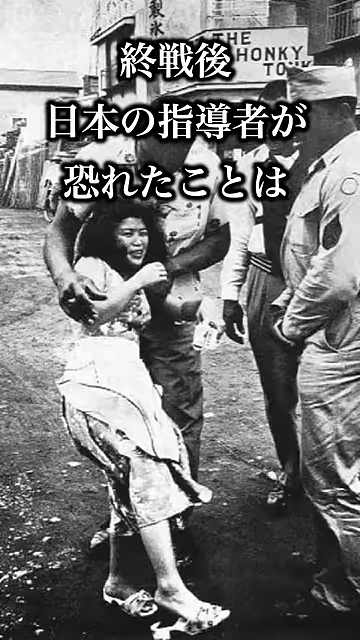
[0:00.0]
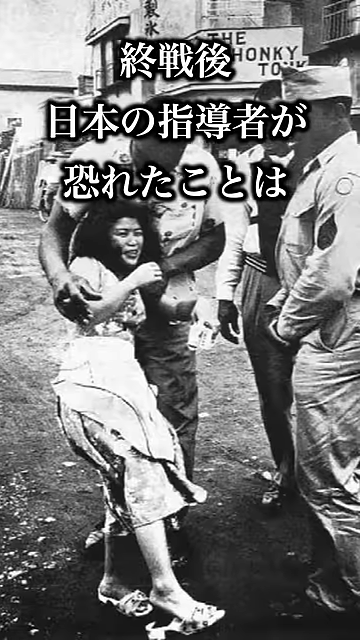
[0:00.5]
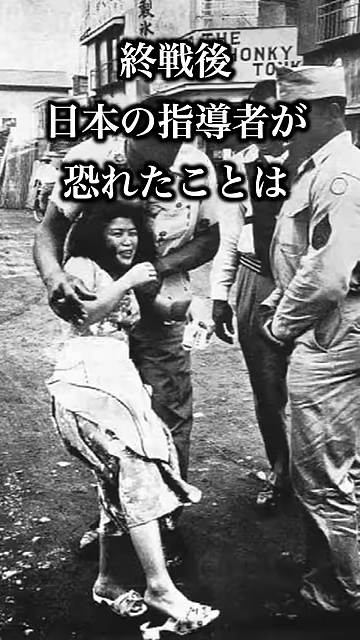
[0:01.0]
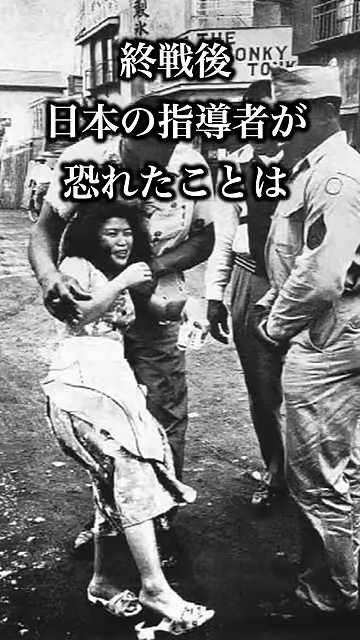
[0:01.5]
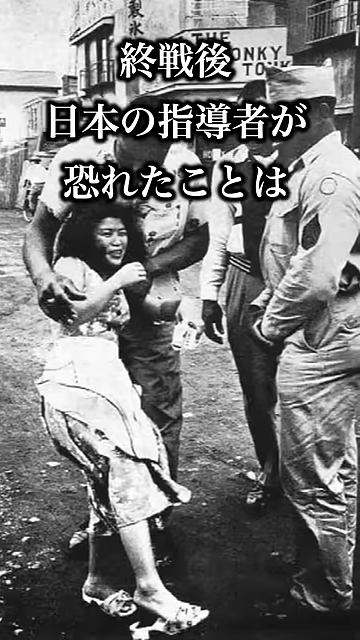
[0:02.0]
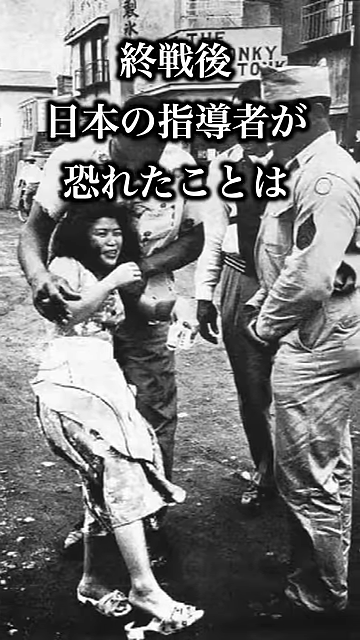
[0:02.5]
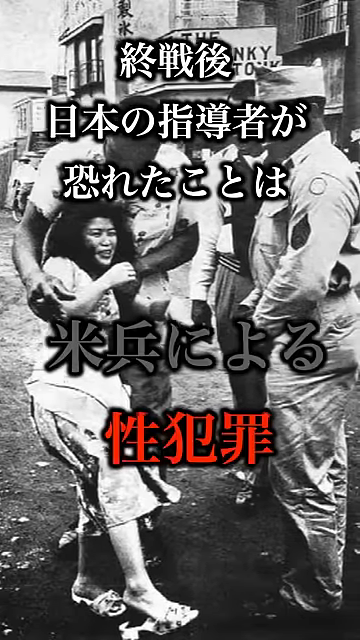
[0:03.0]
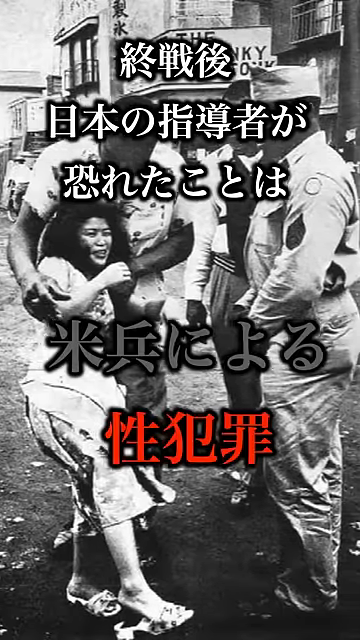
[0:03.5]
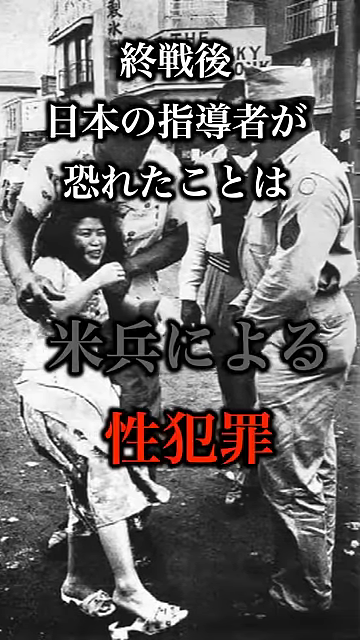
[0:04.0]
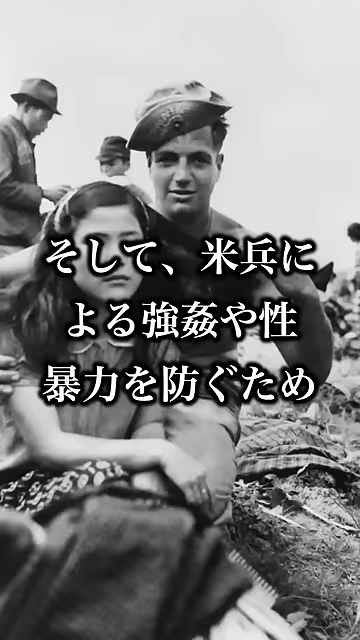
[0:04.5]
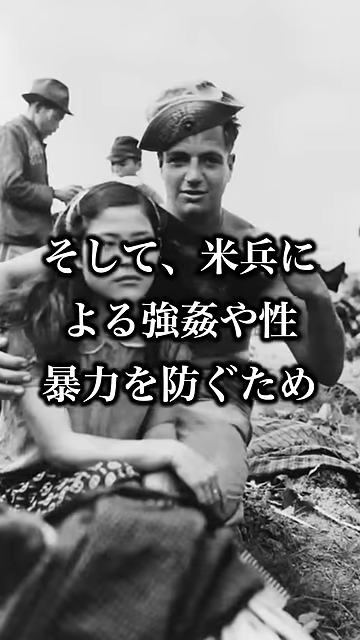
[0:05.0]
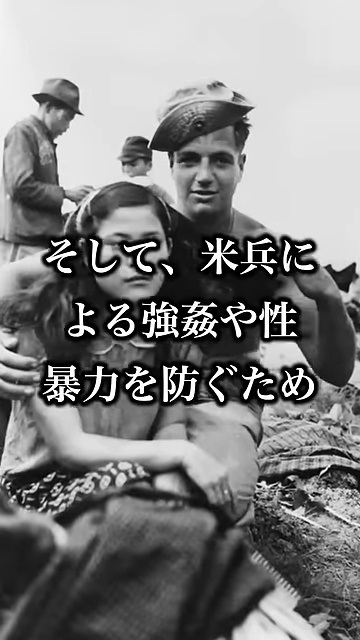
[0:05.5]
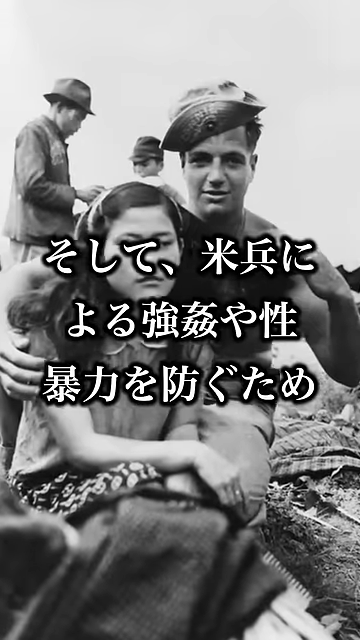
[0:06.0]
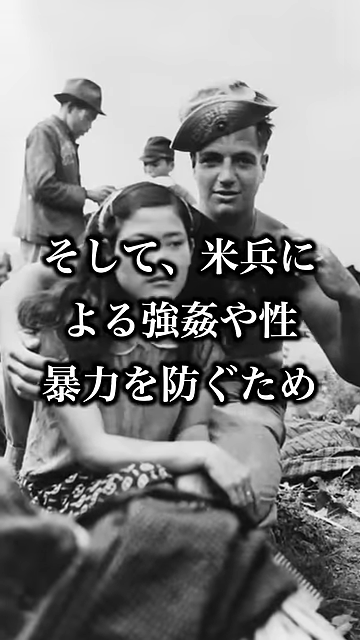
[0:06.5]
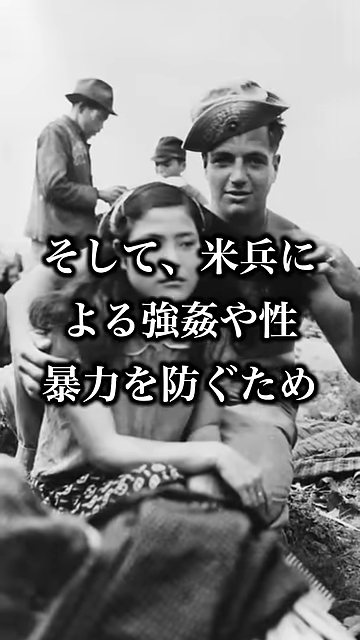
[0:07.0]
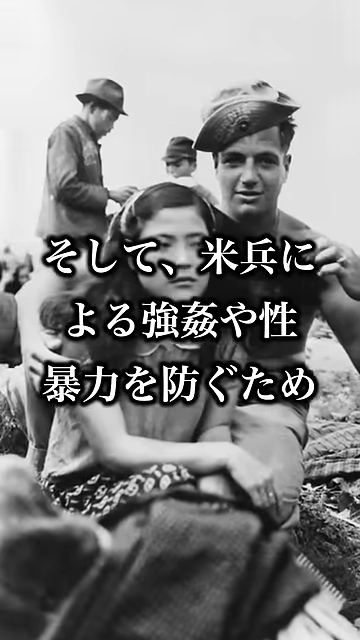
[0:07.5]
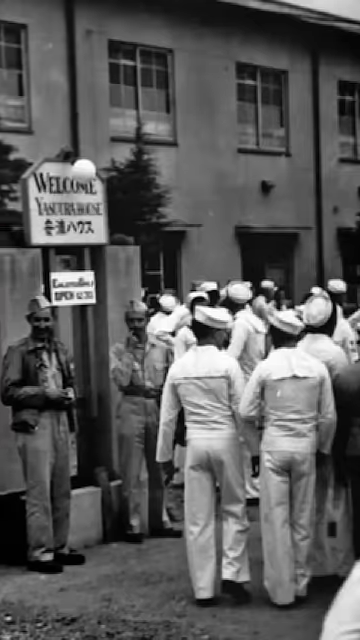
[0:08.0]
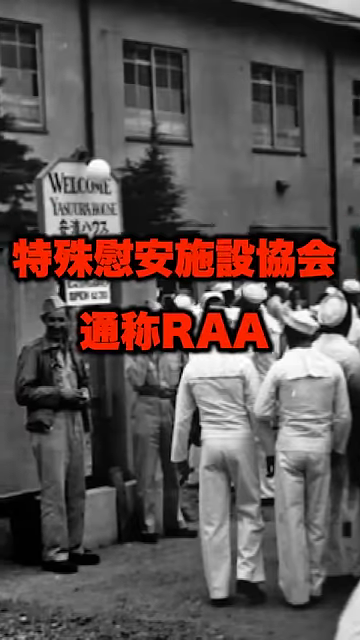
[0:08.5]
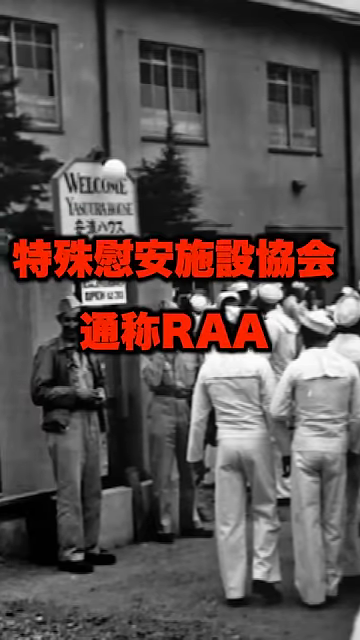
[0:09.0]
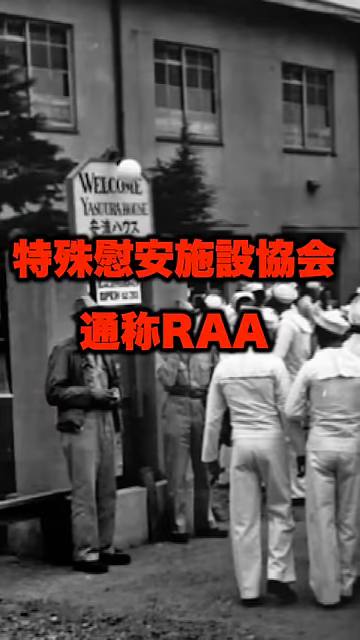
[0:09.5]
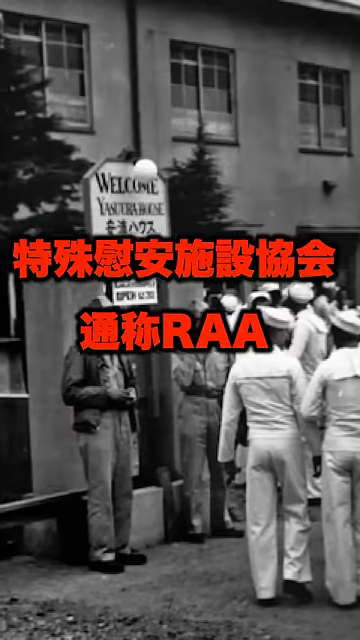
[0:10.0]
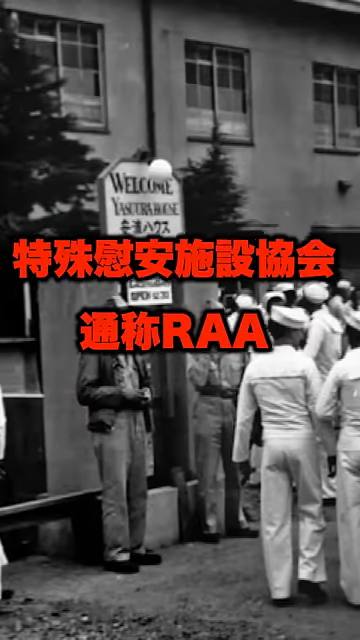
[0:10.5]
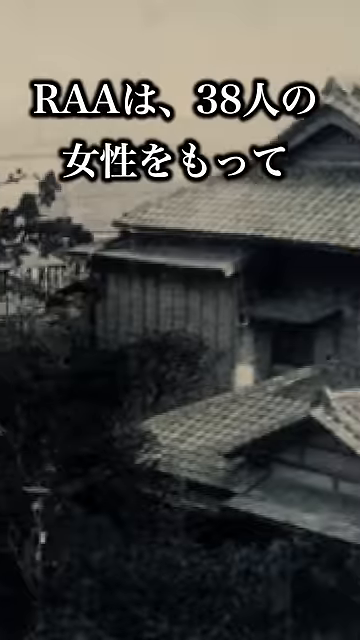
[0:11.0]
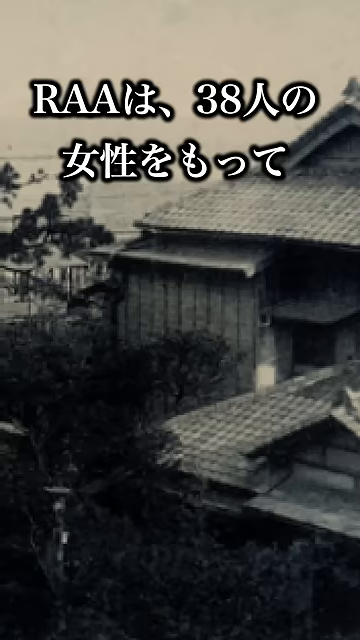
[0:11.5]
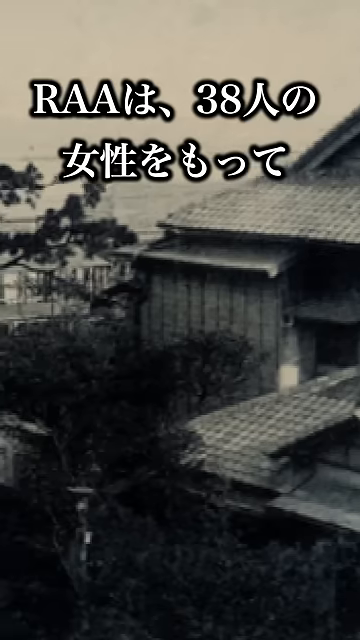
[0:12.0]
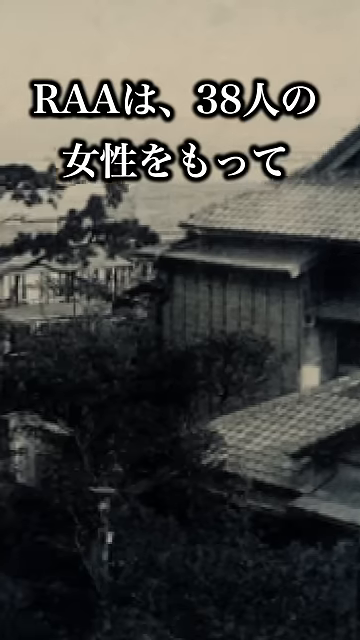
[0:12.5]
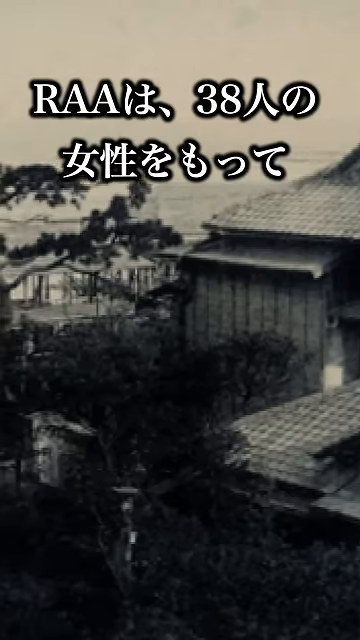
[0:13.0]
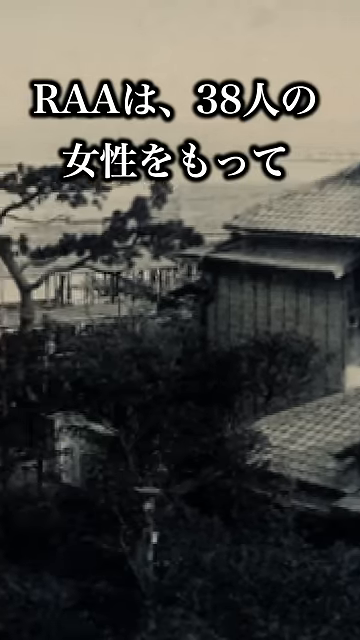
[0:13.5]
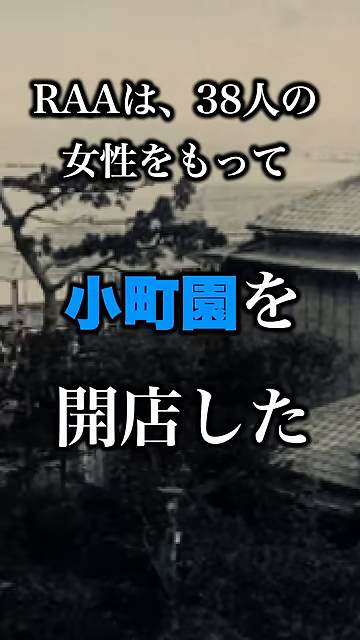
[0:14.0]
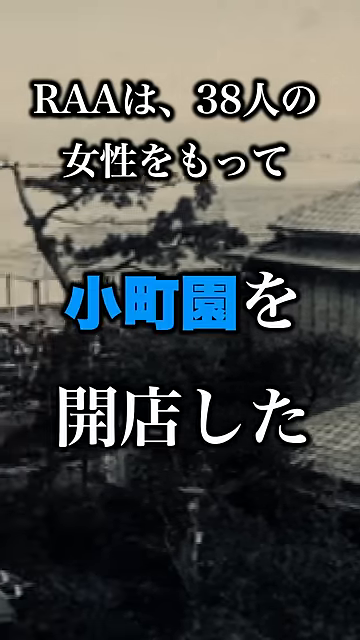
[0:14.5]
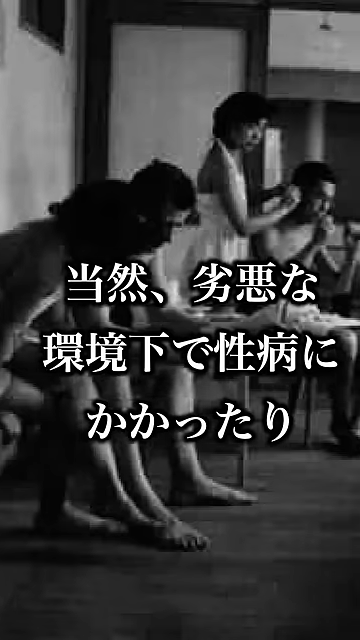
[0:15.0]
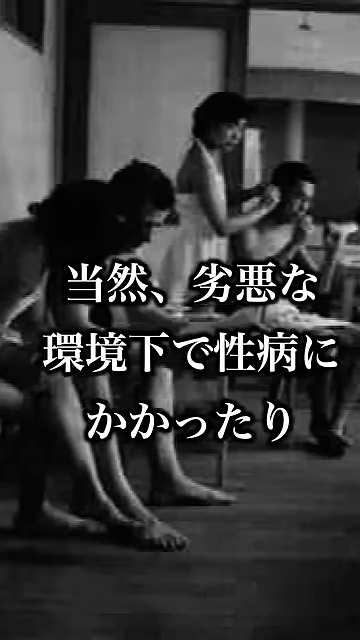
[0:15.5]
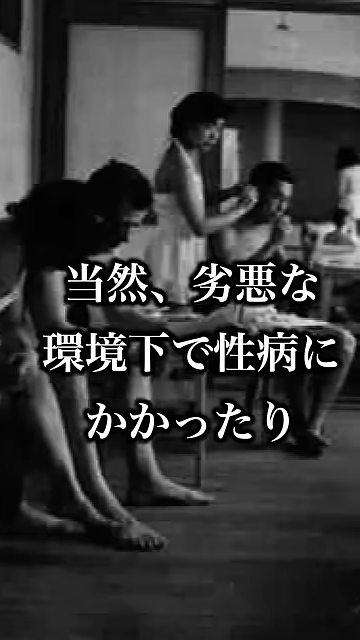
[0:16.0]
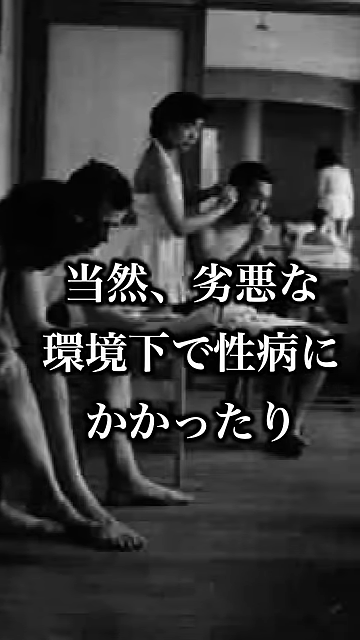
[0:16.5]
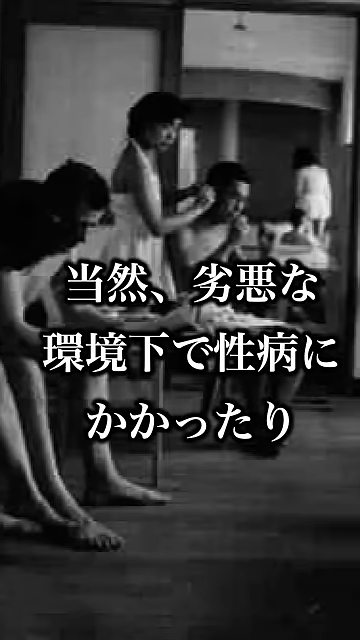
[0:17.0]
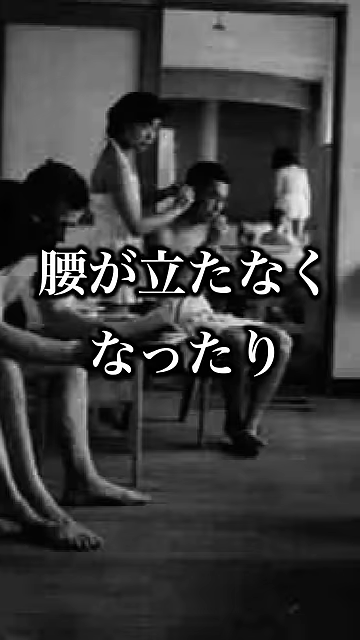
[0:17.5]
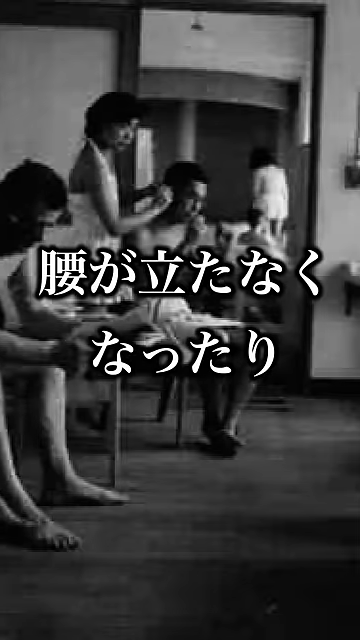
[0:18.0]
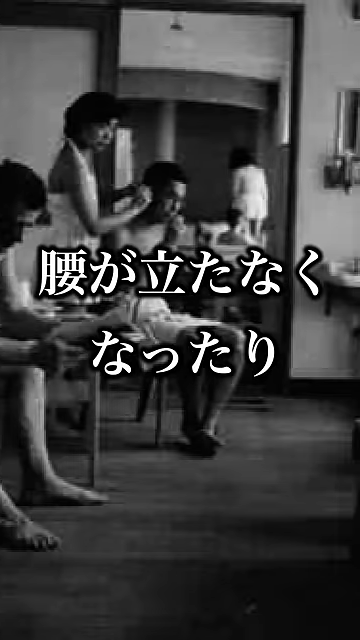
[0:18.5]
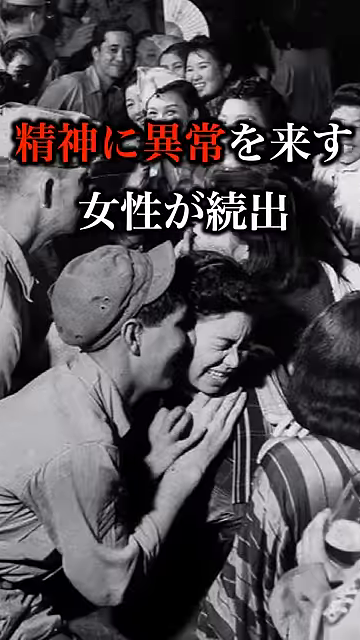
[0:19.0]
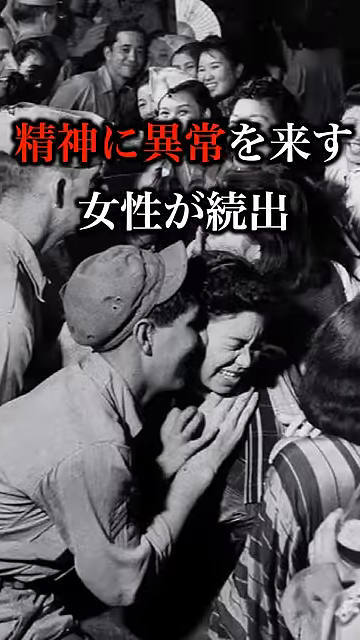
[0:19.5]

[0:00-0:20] What look to be some type of soldiers or policemen are taking people away. The video flashes to more groups of people, seemingly couples hugging each other, with sad looks on their faces. What appear to be fathers kiss sons and daughters, and couples take last pictures together. People apparently in navy uniforms walk towards ships. People are being inspected. A woman is dragged off by some type of officials, apparently against her will; the people do not look happy to be there.